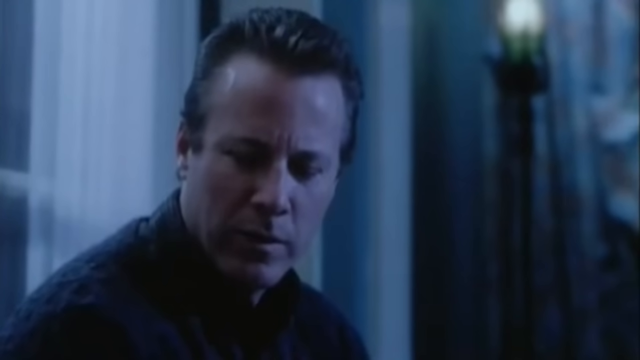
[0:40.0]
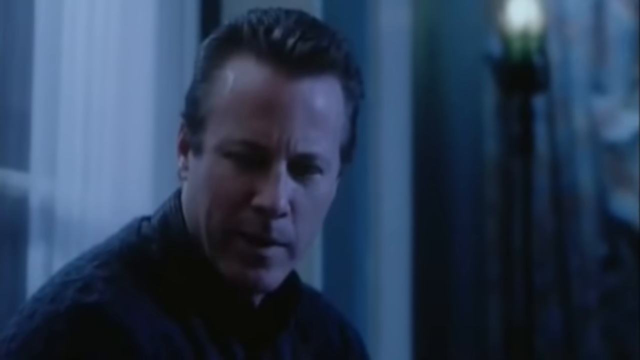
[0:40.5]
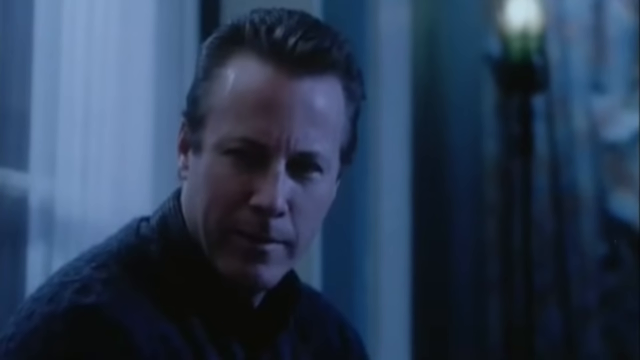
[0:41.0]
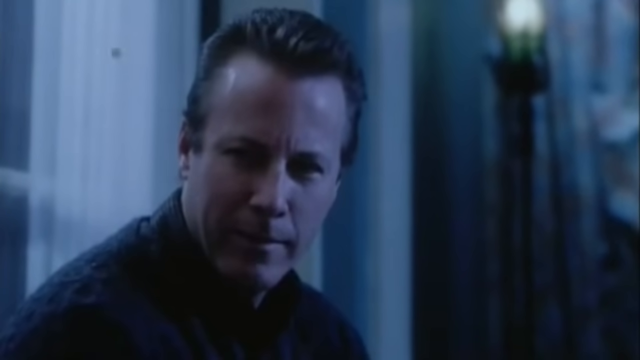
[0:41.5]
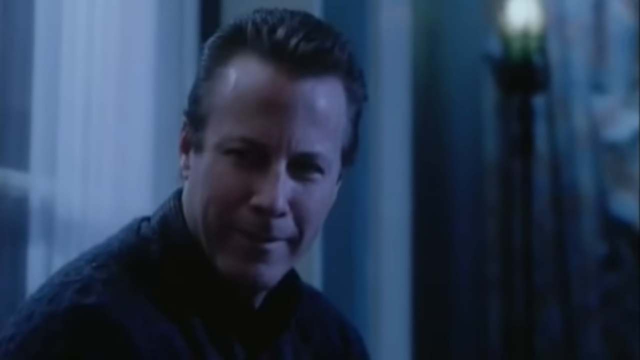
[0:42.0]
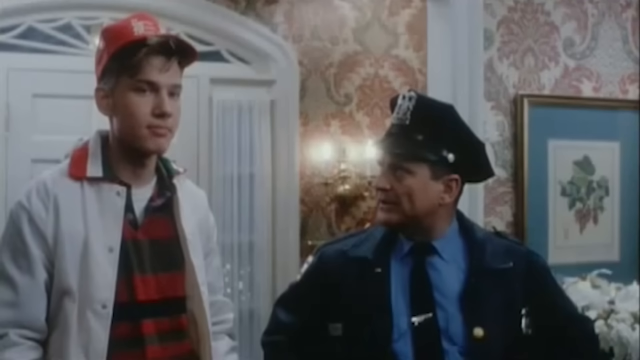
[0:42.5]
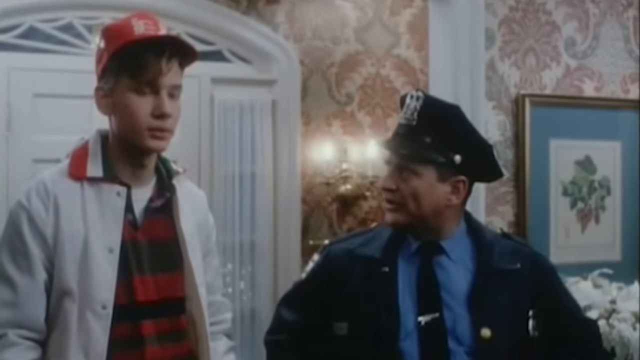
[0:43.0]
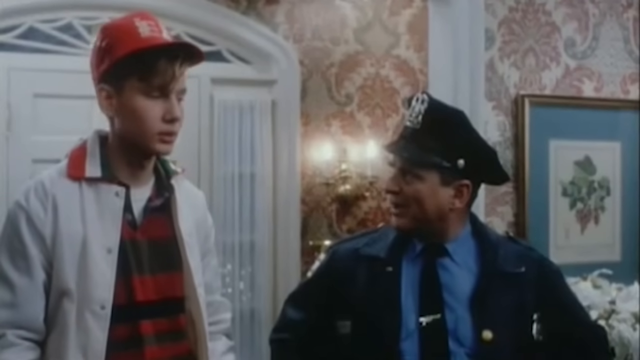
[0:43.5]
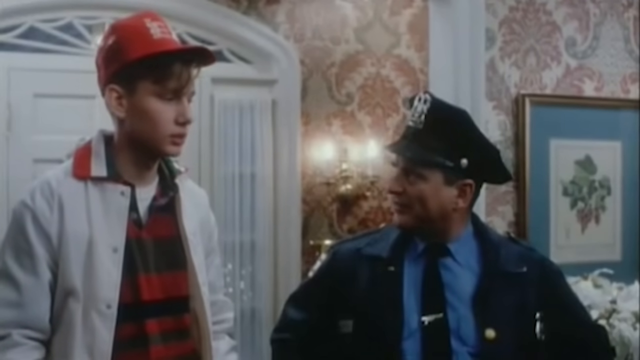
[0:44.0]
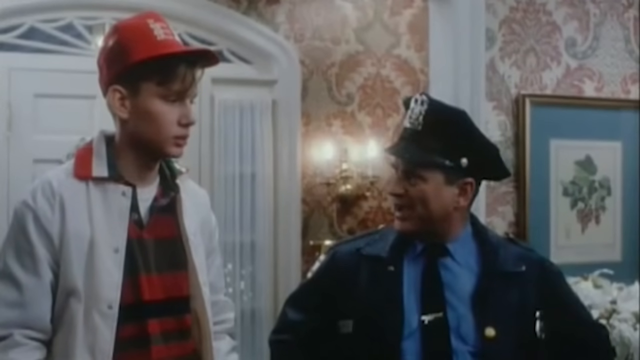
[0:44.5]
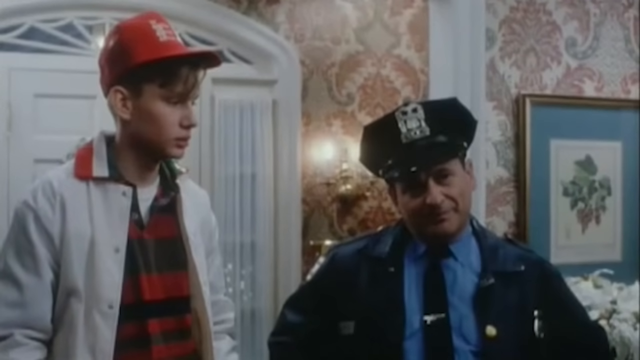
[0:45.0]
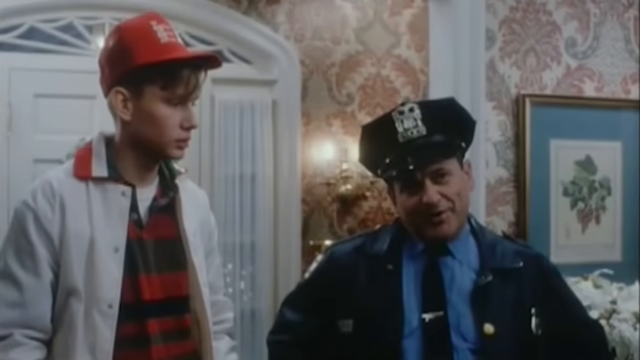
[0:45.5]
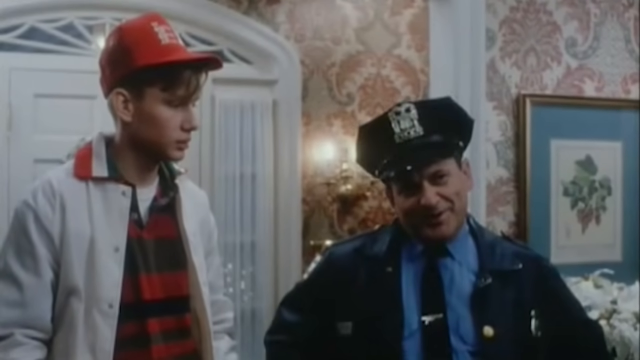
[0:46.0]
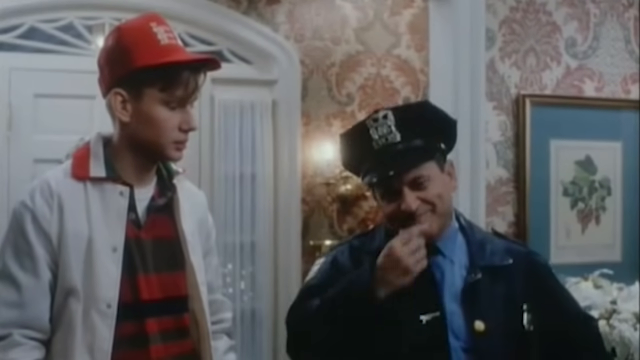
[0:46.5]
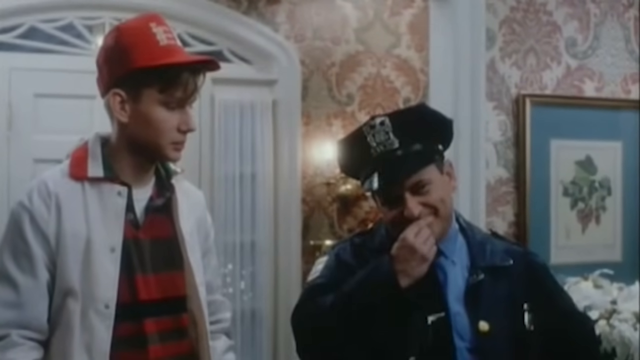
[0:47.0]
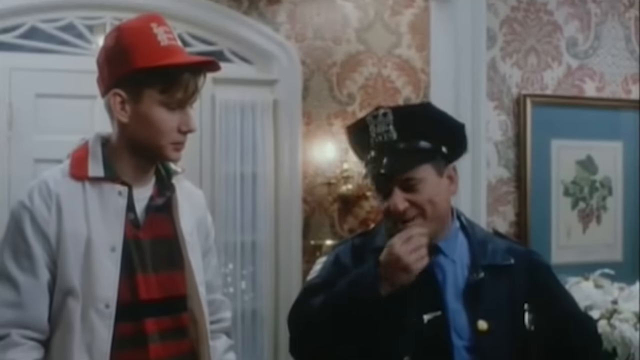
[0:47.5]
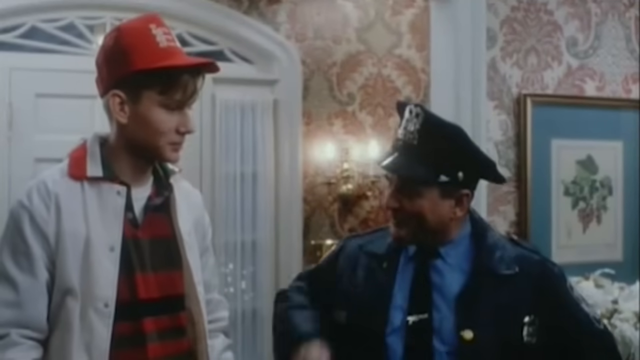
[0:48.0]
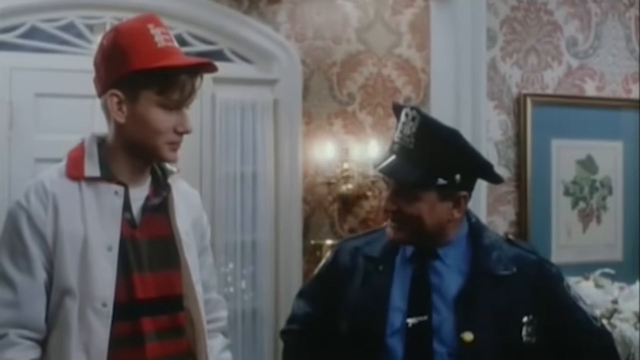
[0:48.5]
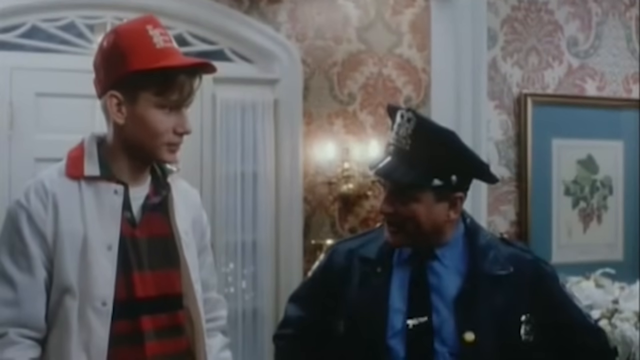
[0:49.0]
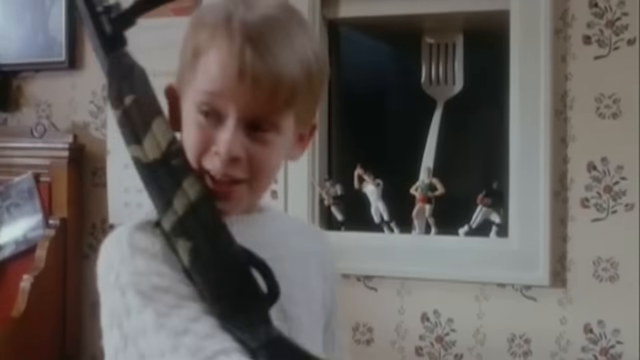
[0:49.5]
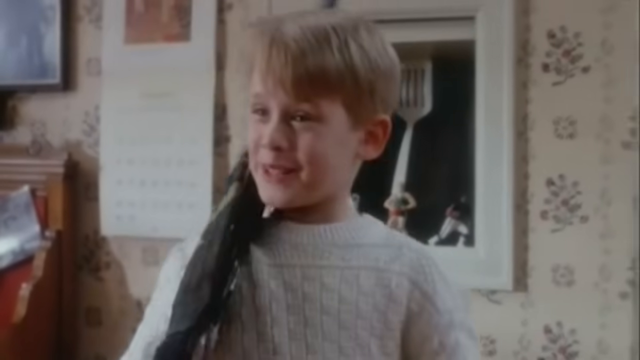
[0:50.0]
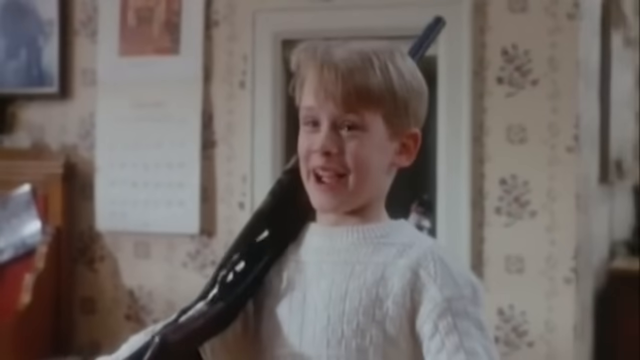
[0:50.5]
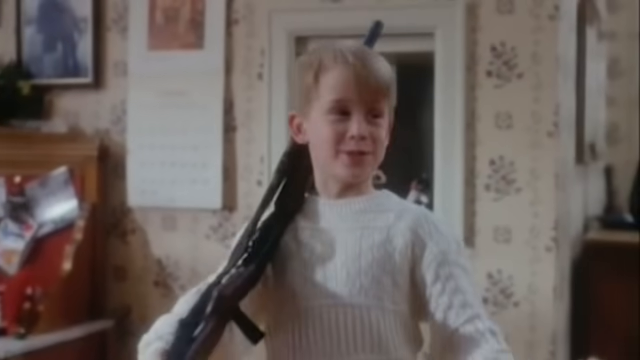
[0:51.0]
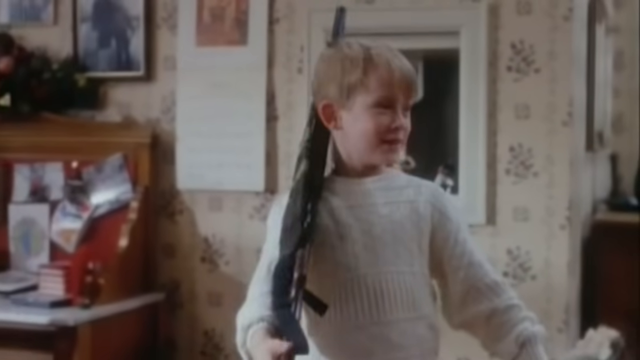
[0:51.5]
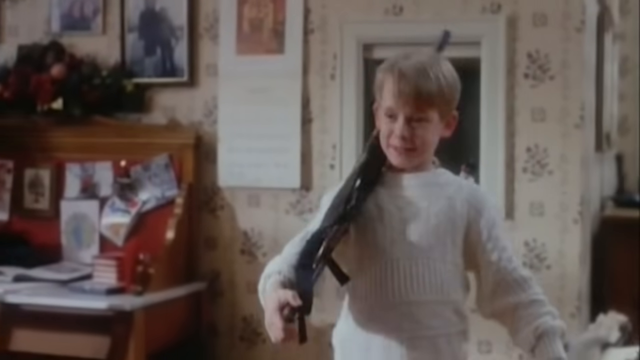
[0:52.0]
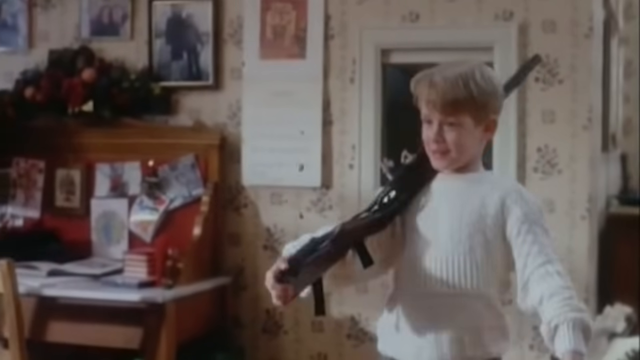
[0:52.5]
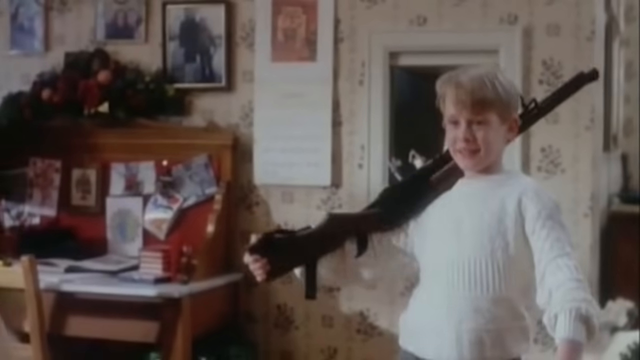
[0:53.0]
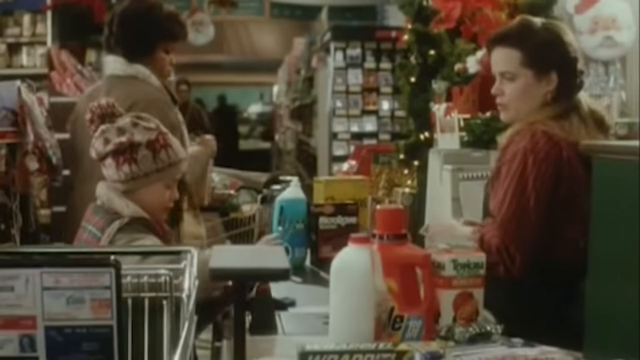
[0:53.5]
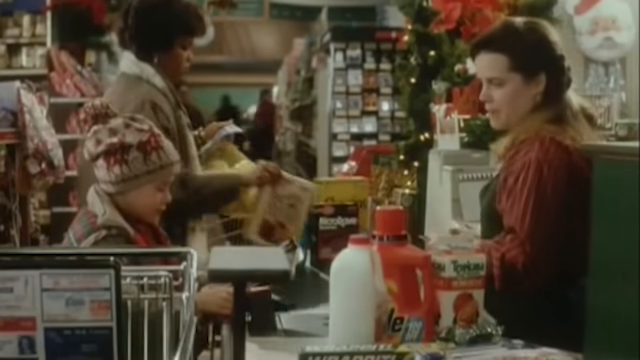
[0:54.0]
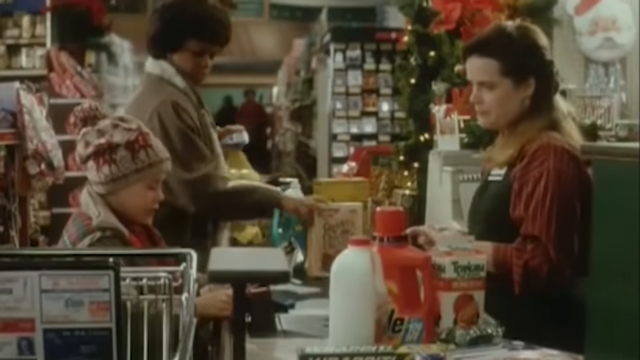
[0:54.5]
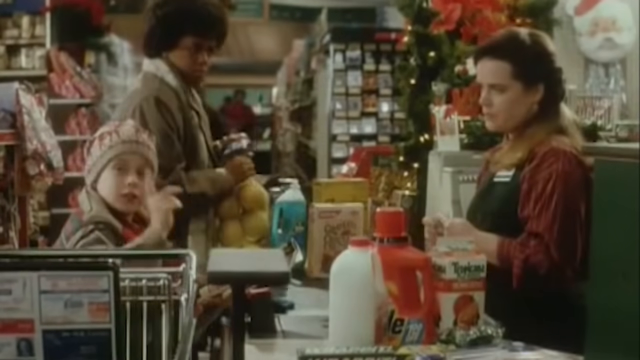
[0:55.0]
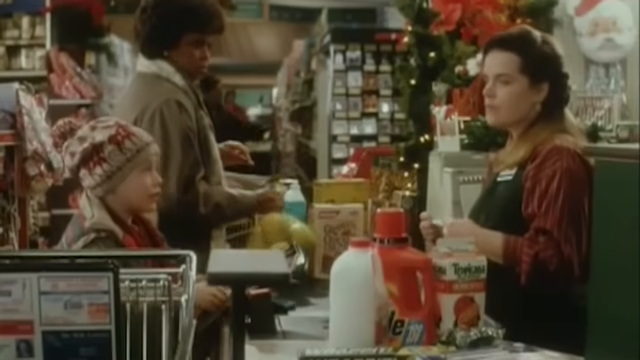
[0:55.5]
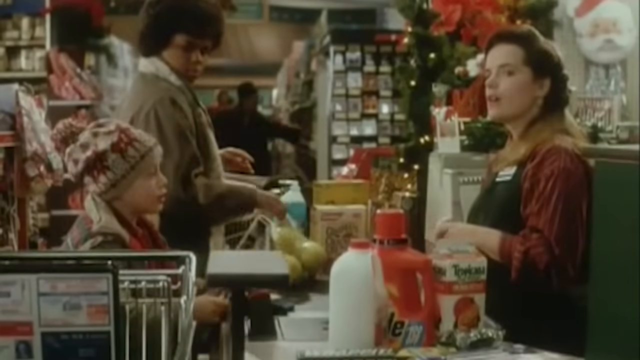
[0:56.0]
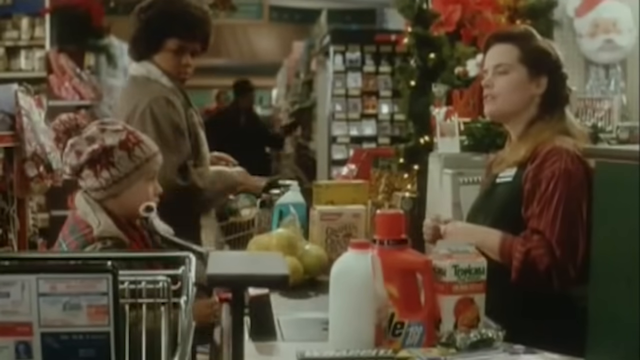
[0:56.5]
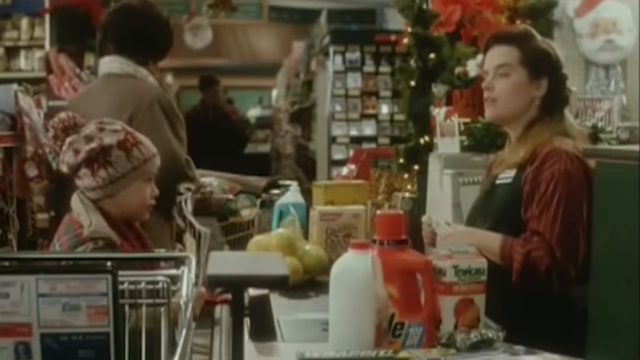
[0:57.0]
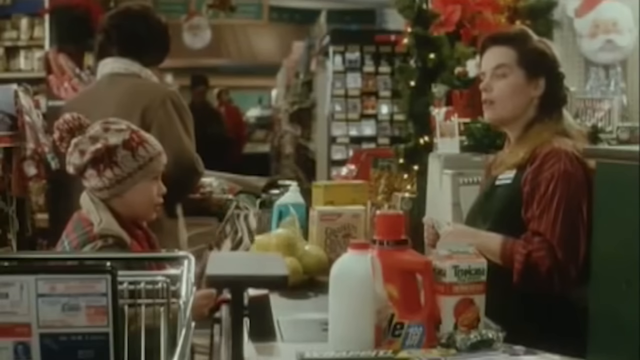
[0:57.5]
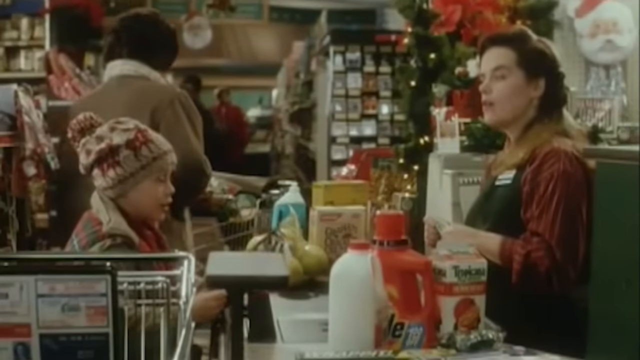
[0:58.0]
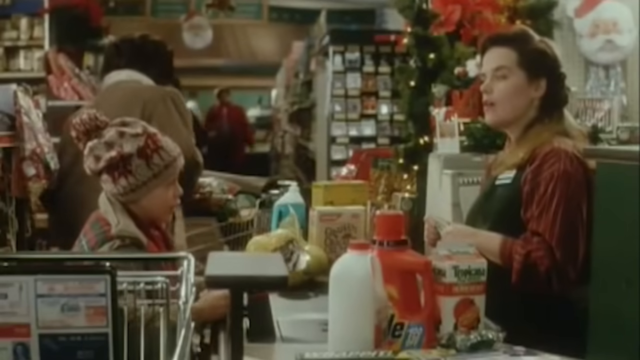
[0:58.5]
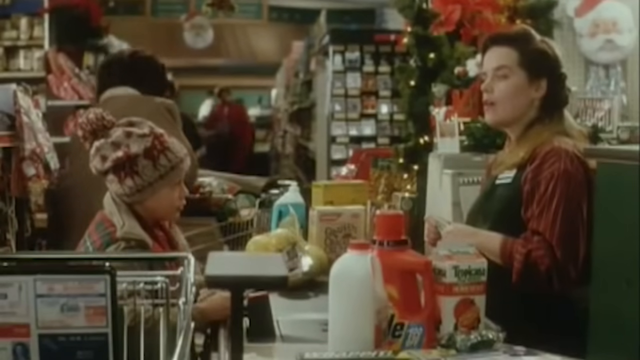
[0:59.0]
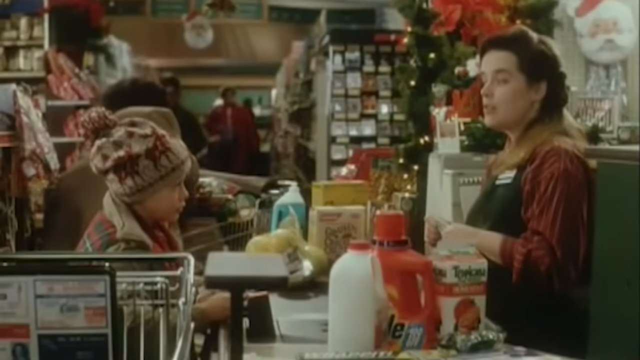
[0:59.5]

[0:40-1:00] Someone is in a dark room. Then a shot shows two people: a pizza man wearing a white shirt with a pizza theme, and a policeman wearing a police hat. Kevin holds a pointed weapon. Four basketball players are behind them. They are in a room with many artworks on the wall and a table on the left. In another scene, Kevin is in a grocery store with a lot of people in the queue. The cashier wears a red and green outfit. Kevin is trying to buy milk and other things, and he hands her a newspaper.